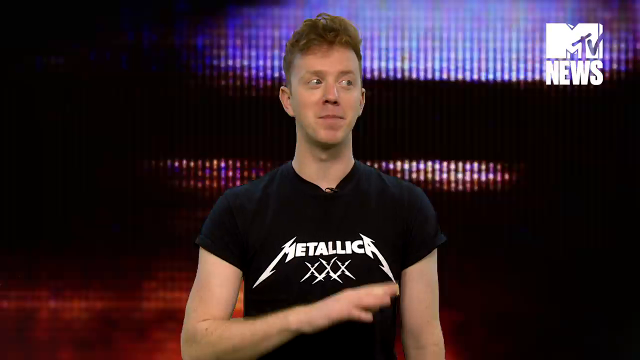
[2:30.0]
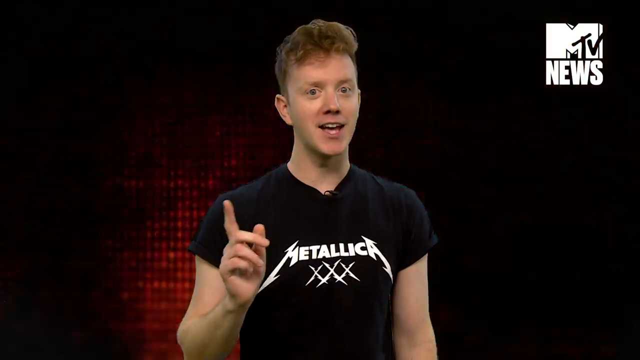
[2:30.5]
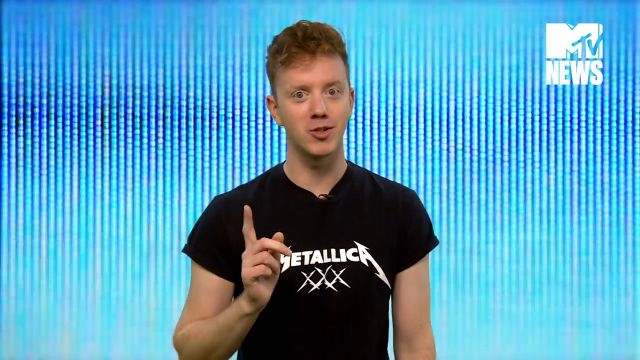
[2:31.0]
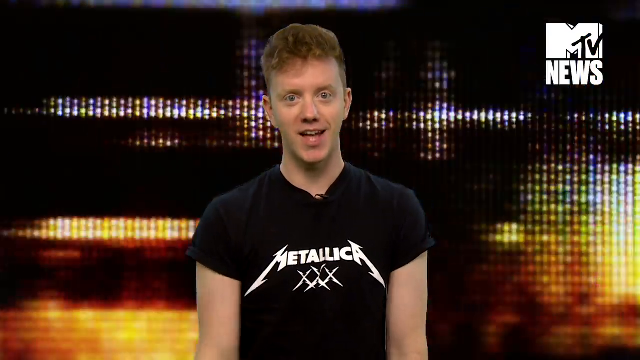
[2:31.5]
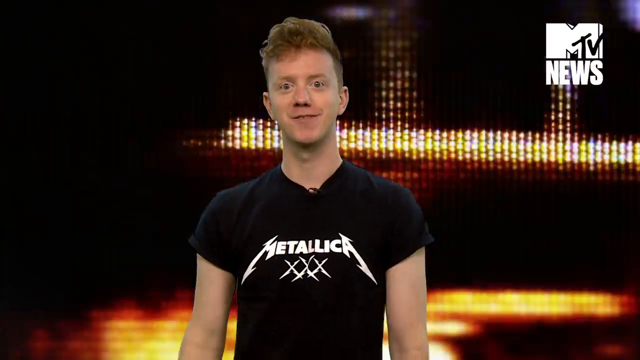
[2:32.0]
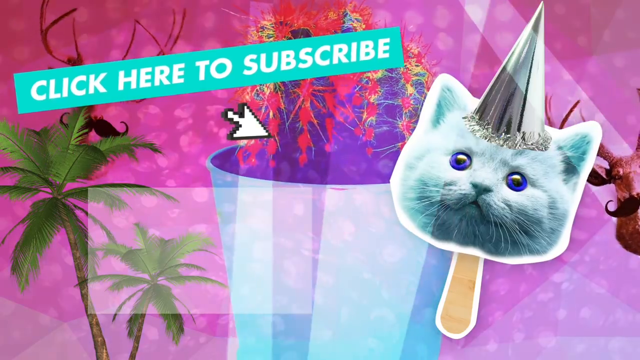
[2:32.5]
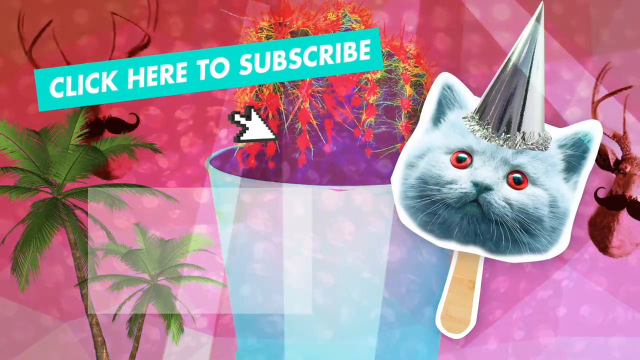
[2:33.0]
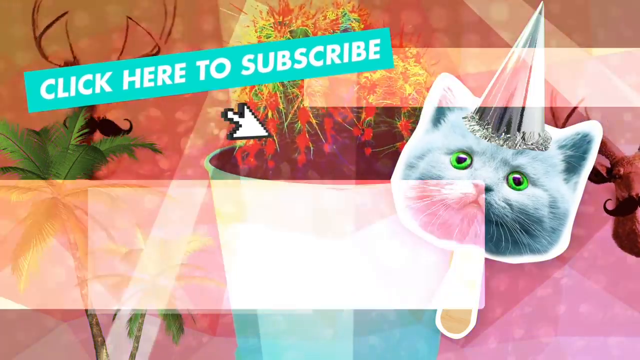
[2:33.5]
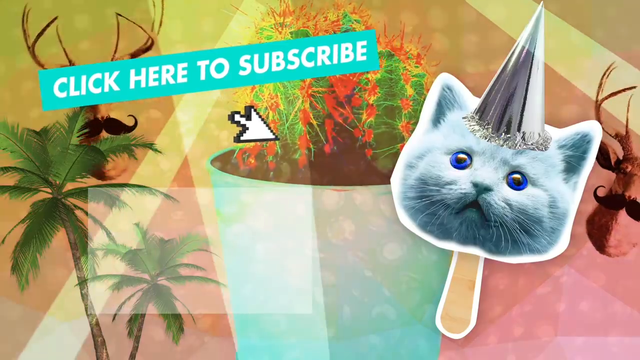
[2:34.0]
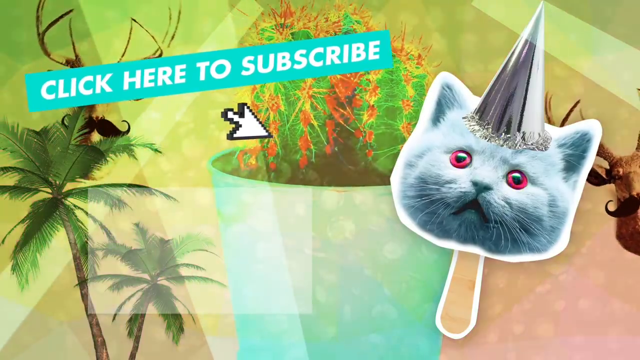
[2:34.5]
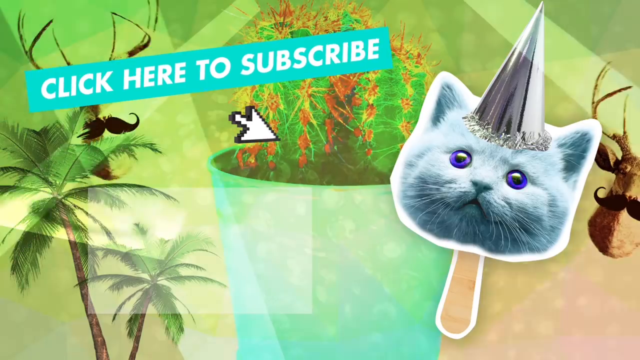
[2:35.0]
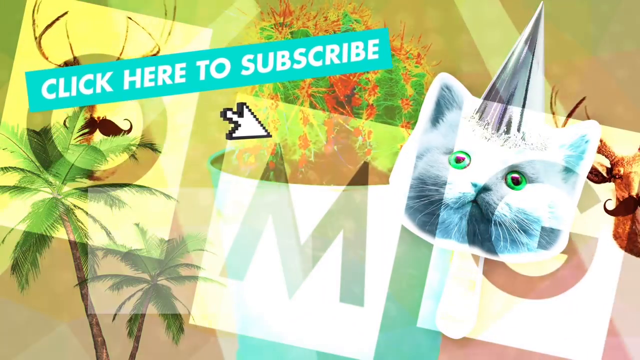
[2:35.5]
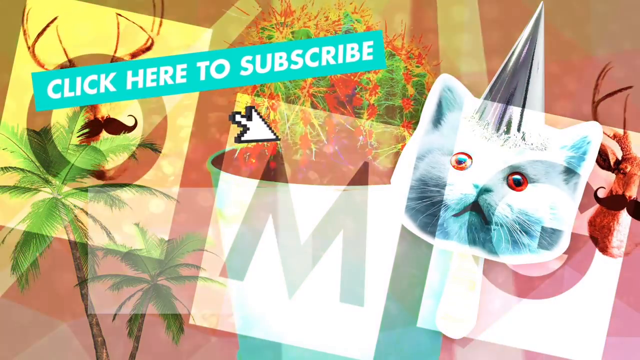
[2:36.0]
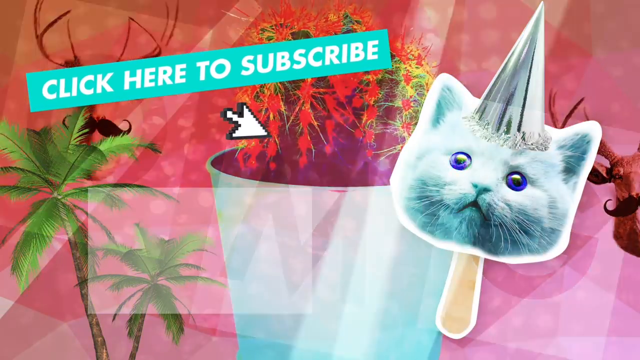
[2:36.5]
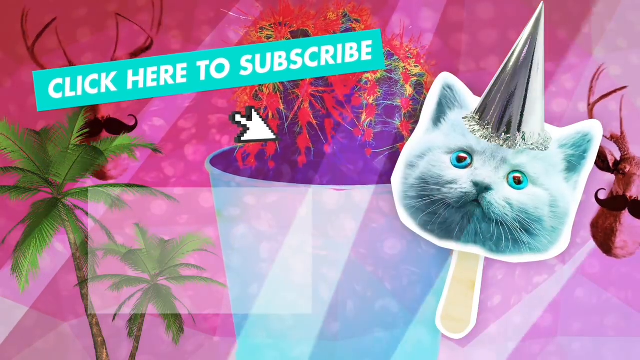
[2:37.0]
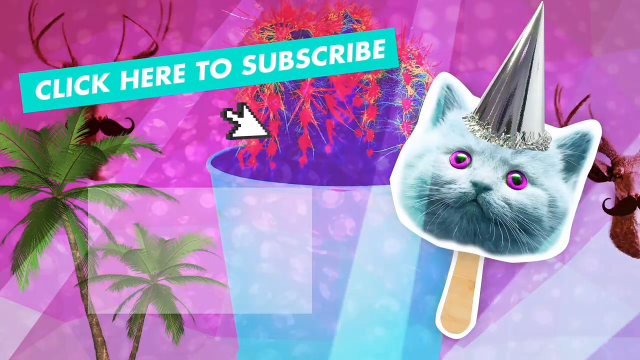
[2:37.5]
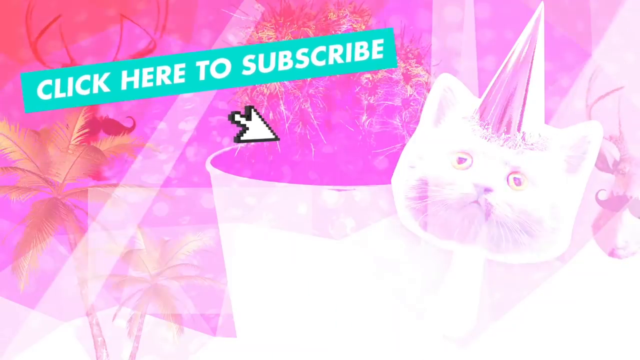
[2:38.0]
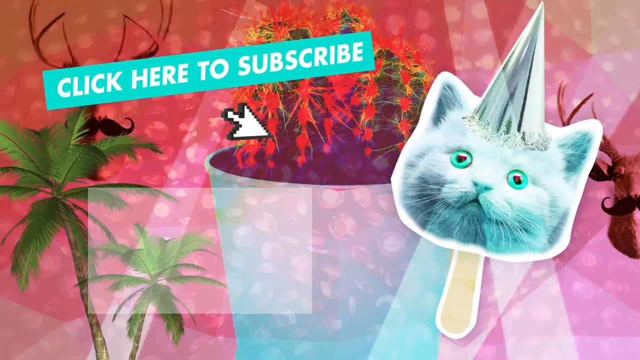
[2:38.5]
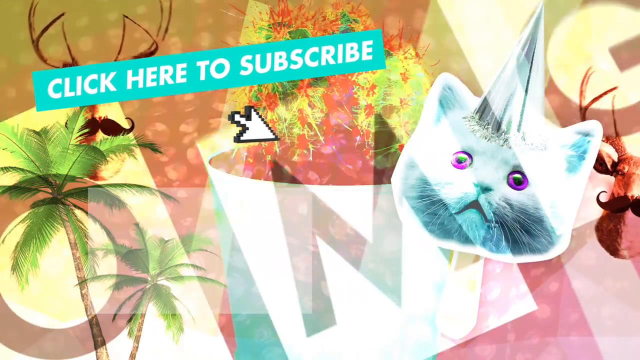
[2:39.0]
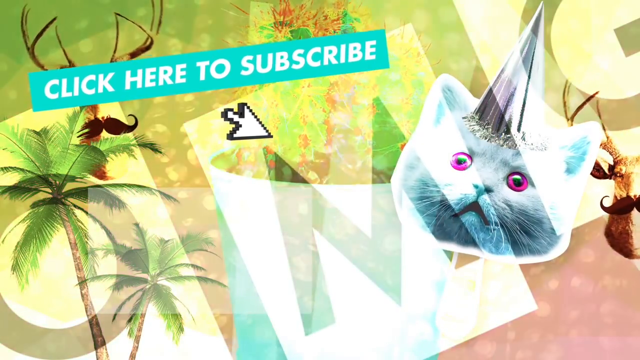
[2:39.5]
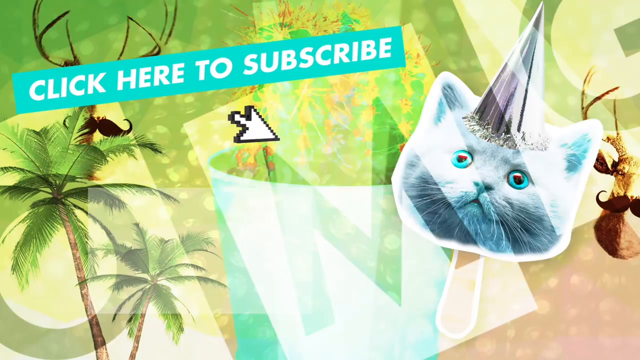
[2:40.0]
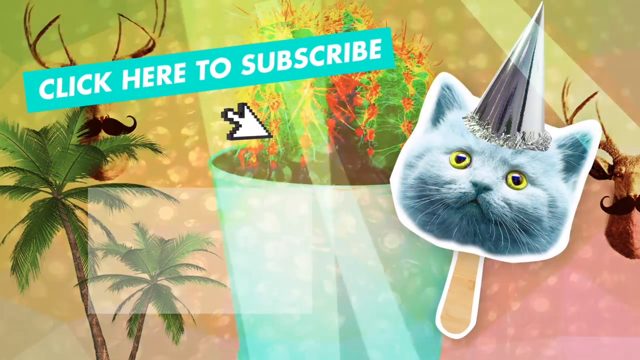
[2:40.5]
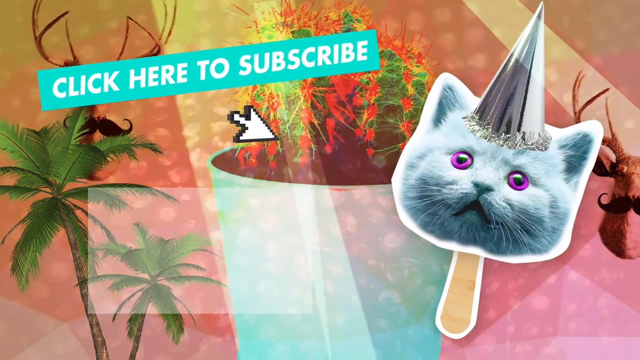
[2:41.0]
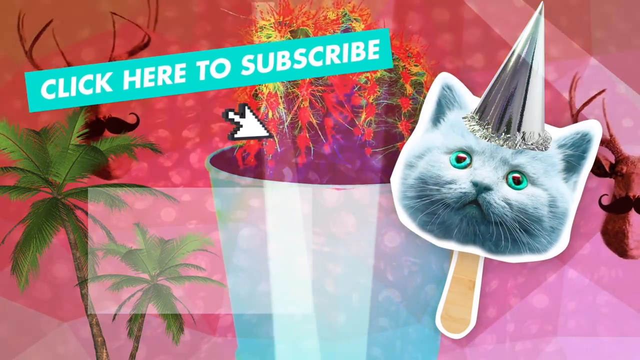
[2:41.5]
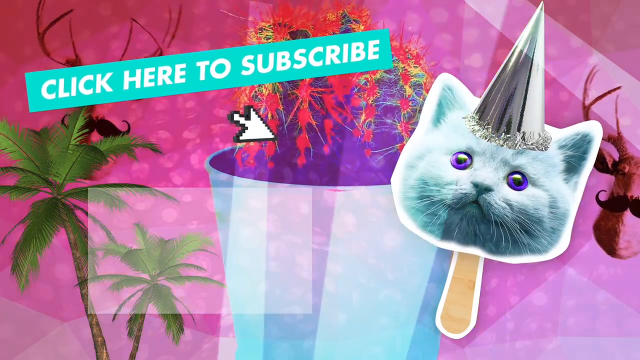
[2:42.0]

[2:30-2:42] The Caucasian man, between 20 and 25, in the black shirt with white metallic text, appears to be speaking, probably giving an outro. The video then shows a screen that says "click here to subscribe" with the head of a cat with a unicorn horn on a popsicle stick, an arrow cursor pointing to what seems to be a marijuana or weed plant, some palm trees to the left of it, and some kind of deer with mustaches in the background.